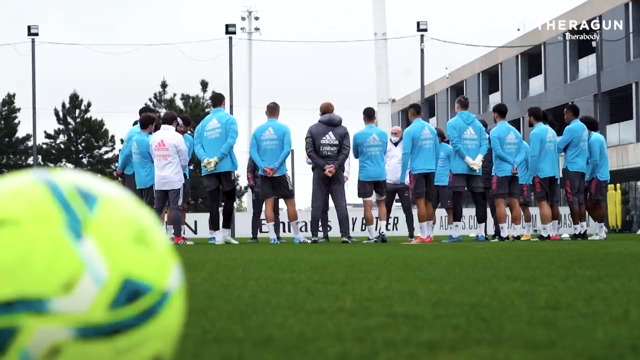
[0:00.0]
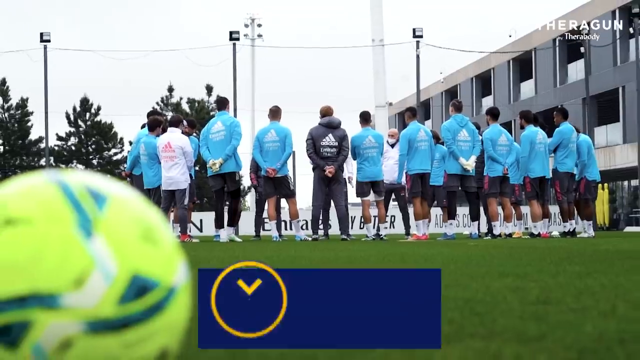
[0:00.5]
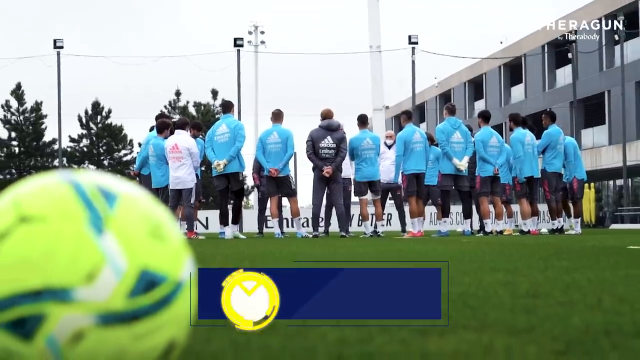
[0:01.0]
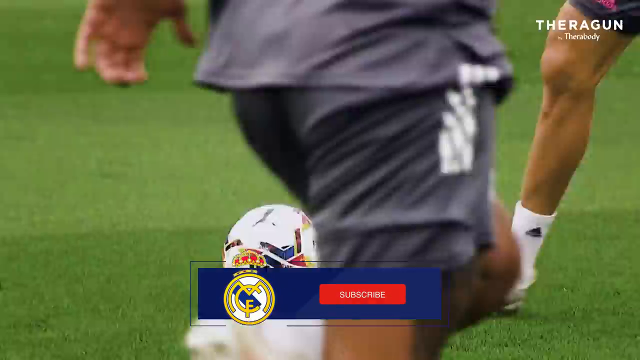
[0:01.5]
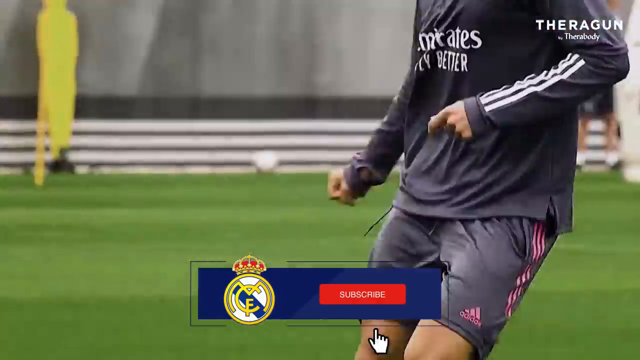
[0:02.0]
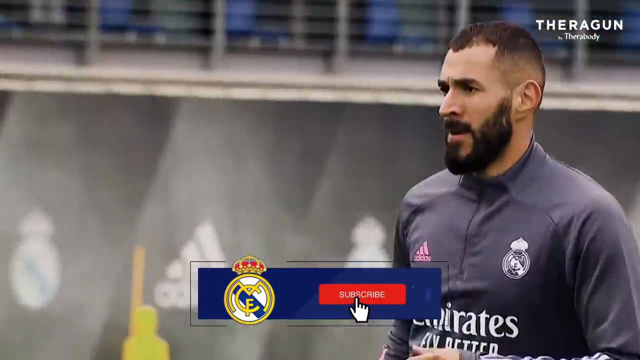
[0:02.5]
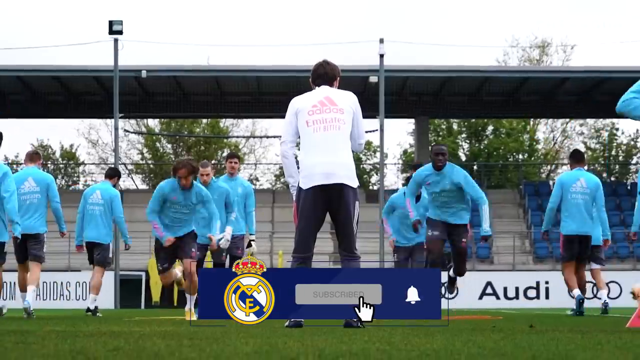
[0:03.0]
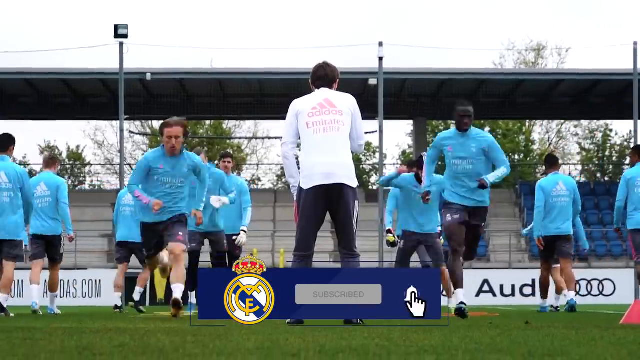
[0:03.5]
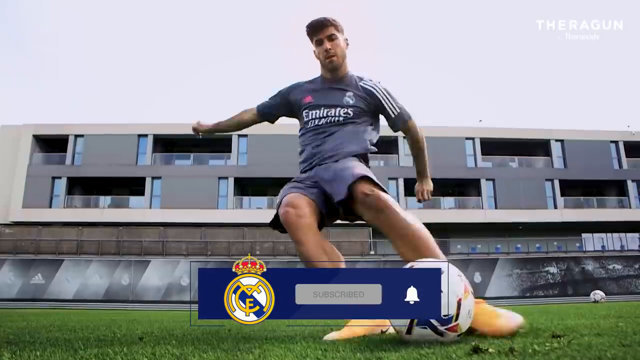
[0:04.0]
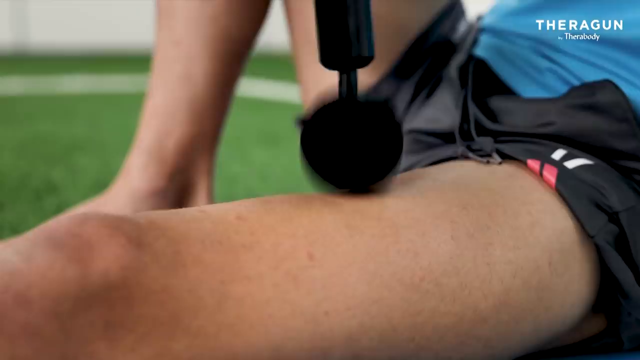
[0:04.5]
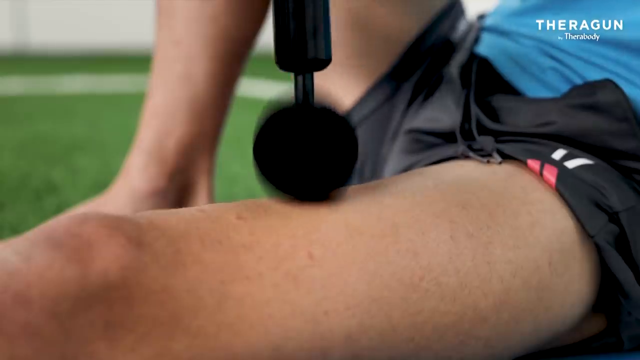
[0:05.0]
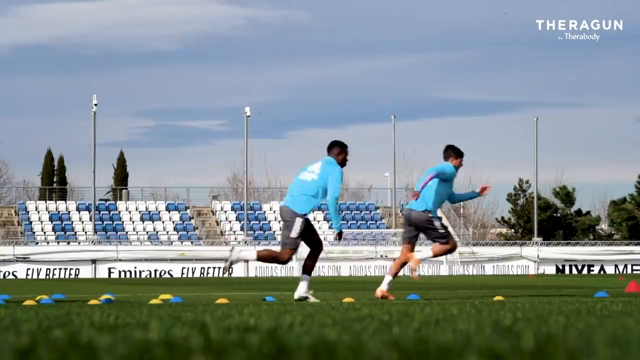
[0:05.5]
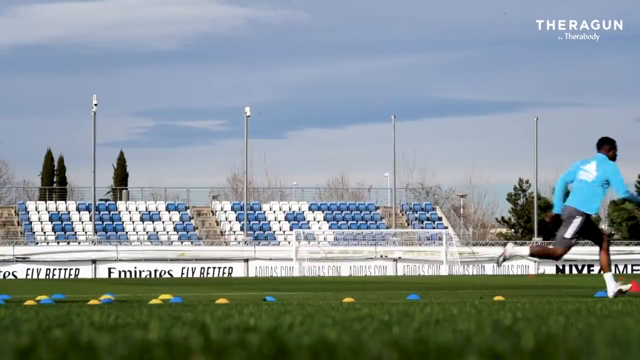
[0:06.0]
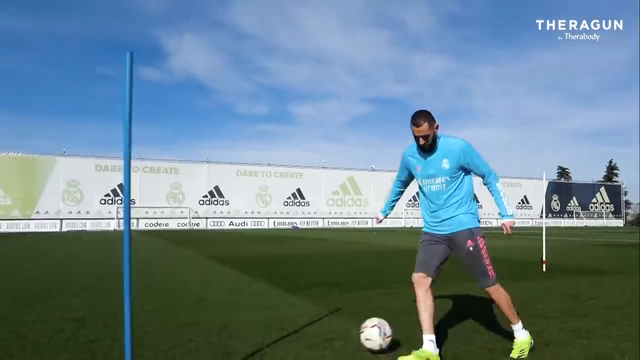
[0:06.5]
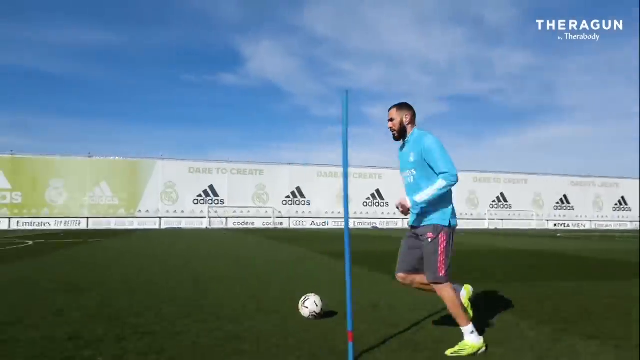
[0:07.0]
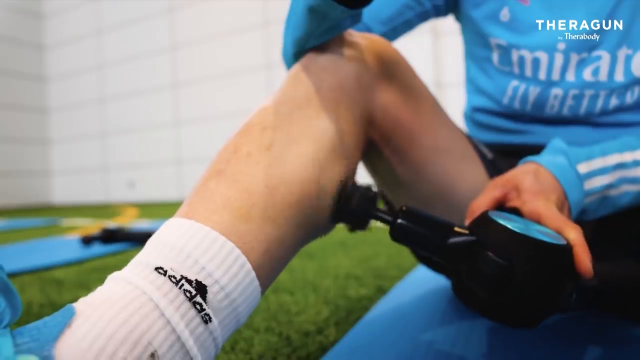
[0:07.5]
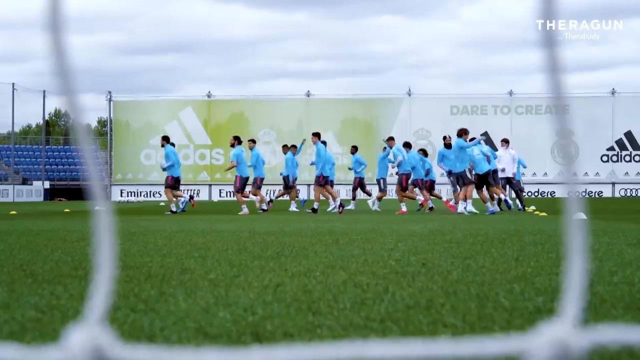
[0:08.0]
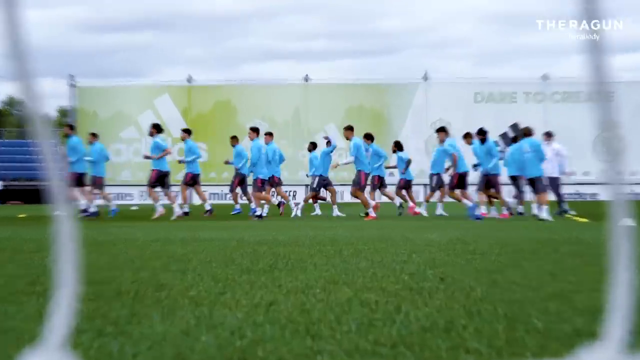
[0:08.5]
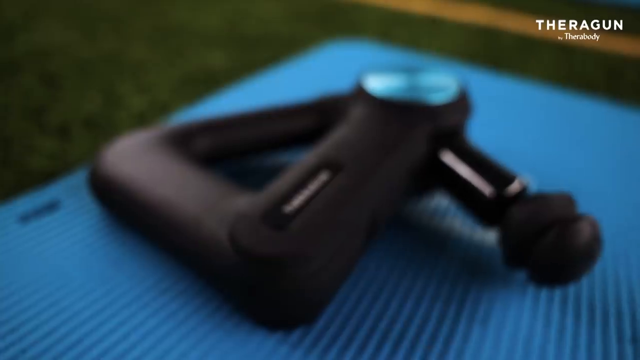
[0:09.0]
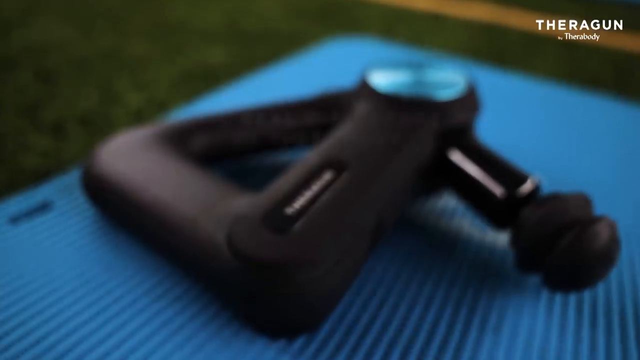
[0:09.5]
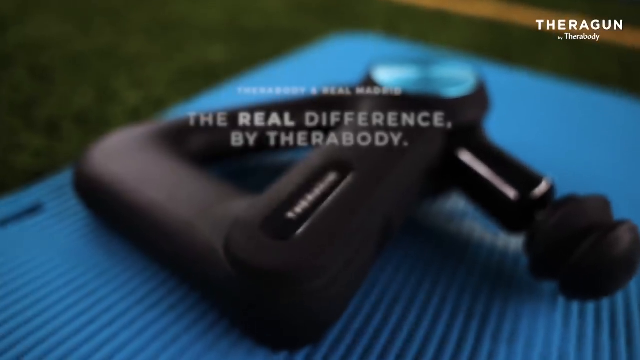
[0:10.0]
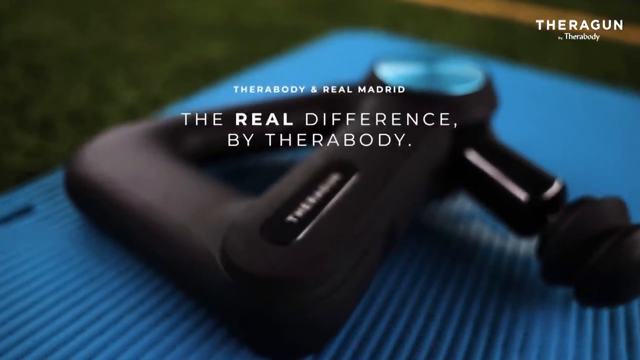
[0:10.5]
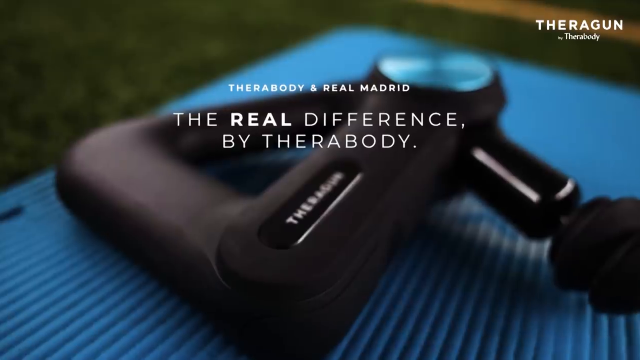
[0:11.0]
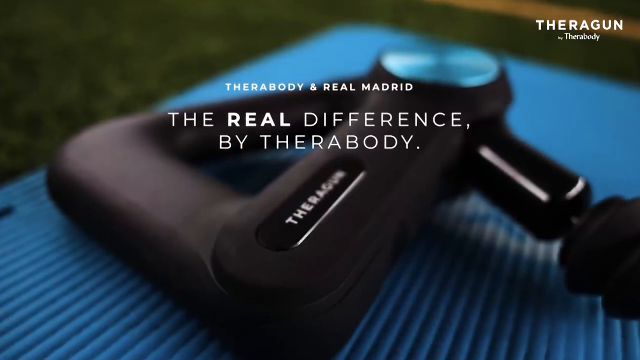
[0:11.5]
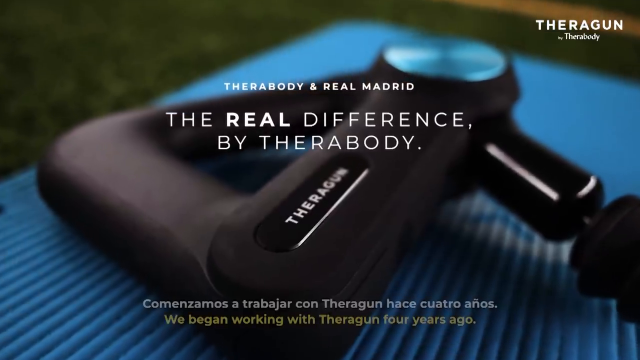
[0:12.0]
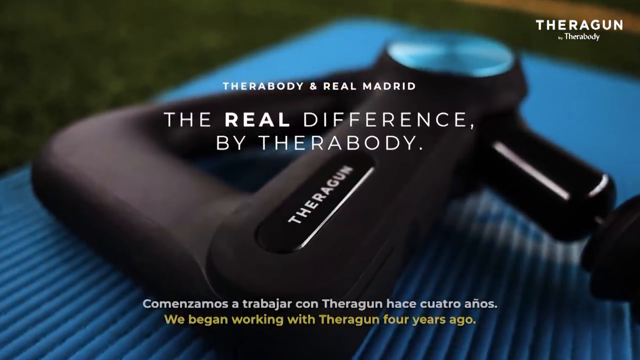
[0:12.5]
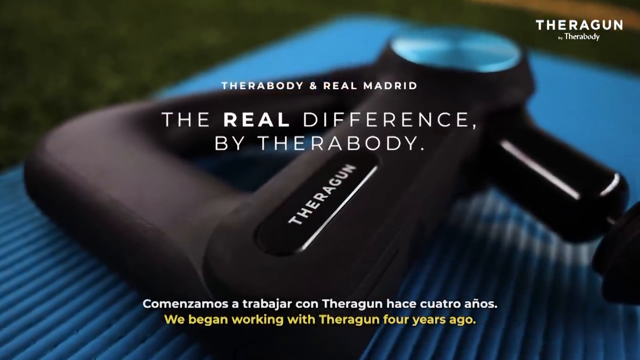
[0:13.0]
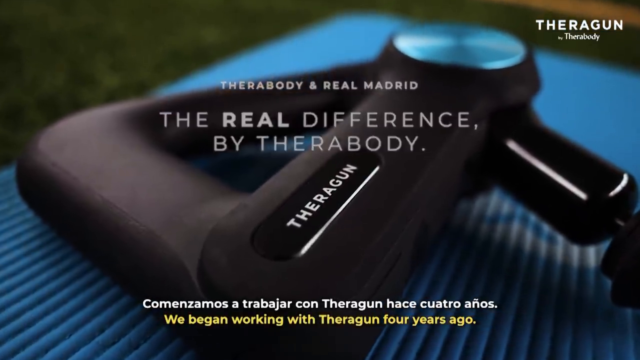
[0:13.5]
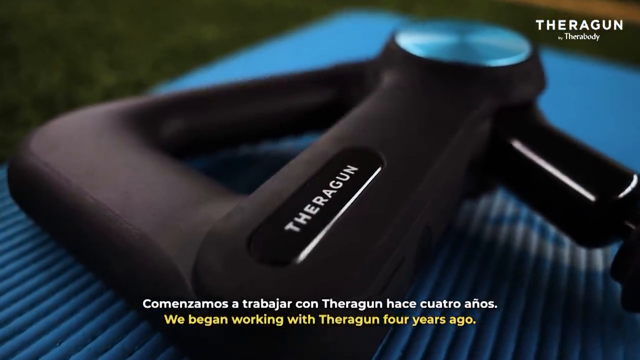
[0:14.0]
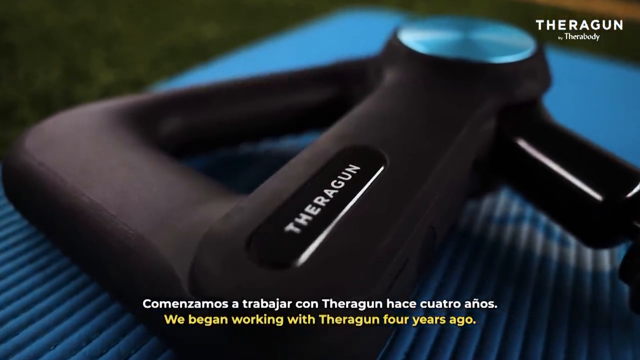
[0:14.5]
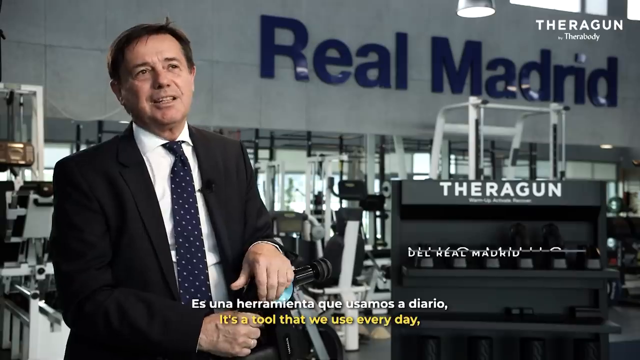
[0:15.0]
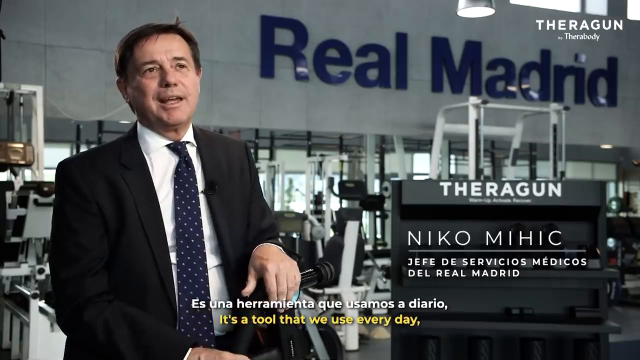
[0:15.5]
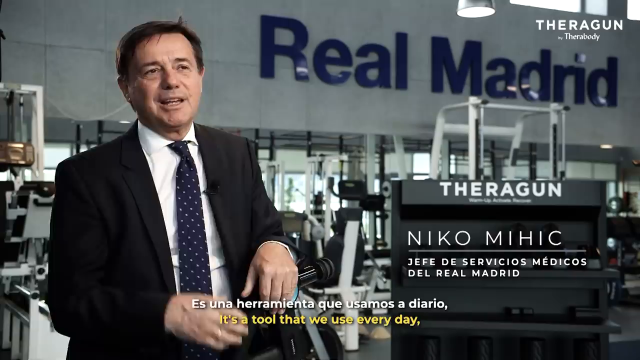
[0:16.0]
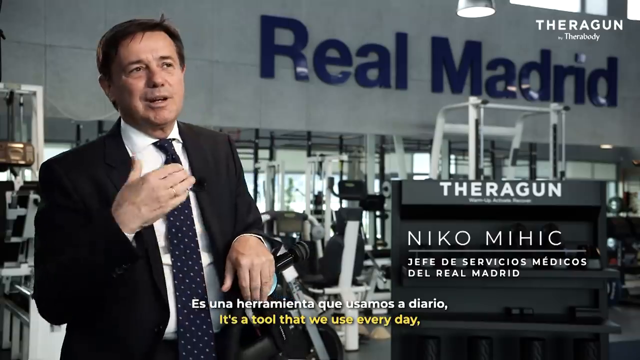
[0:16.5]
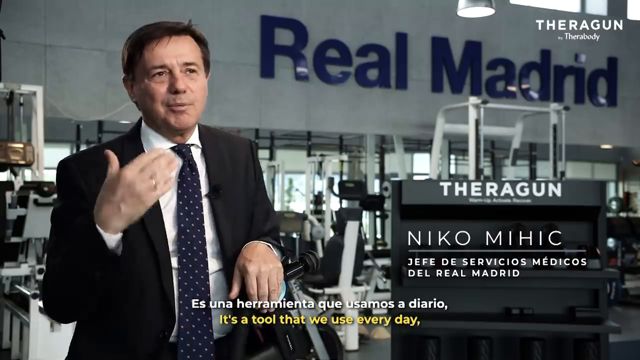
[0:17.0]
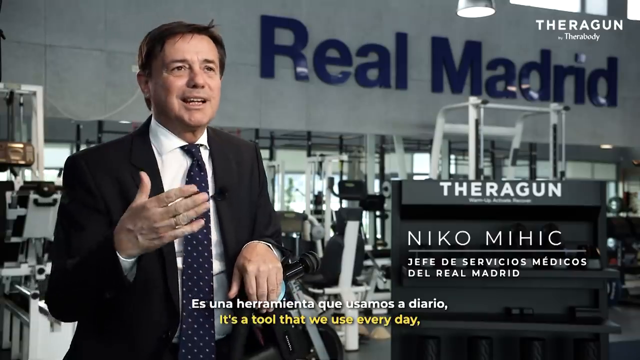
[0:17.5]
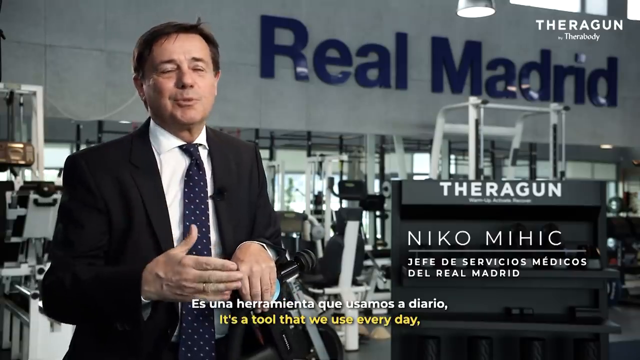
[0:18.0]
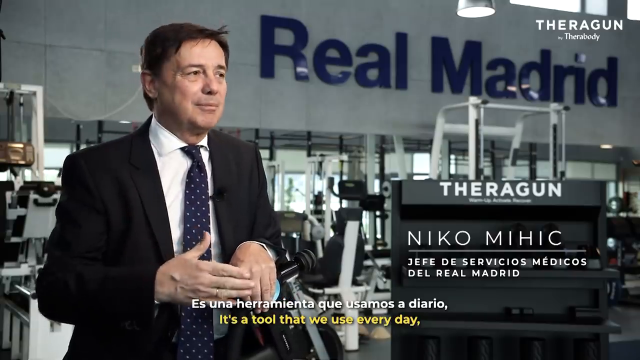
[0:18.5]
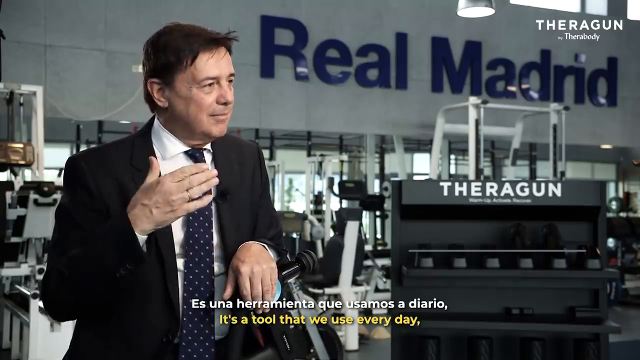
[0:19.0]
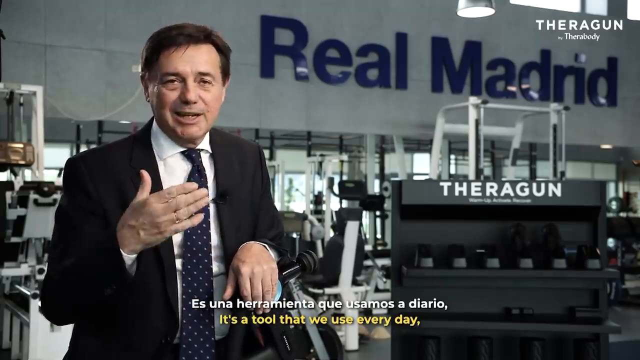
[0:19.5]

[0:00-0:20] A group of what appear to be soccer players stands together. Most wear black shorts and blue long-sleeved shirts with the Adidas logo on the back. A man in the middle wears a black hooded puffy jacket with the Adidas logo. A good number of them have their hands behind their backs, and a building is visible in the background. Someone in the middle talks to them as they form a rough semicircle. A close-up shows a green soccer ball. A player dressed all in black, with "Emirates" on his jacket, kicks a ball with his right foot. The players in blue line up in front of a man in white who faces them, and they sprint one after the other. A man in black kicks the soccer ball with his left foot. A man sits with his leg out as a massager moves up and down on it. Two players in blue long-sleeved shirts and black shorts run one after the other next to cones on the ground. A man kicks the soccer ball with his left foot. Someone uses the massager on a calf. A group of players runs in two directions: most run the same way, while a couple run the opposite way and high-five the players going the other way. A still photo of the massager appears, with "Thera Gun by Therabody" in the right-hand corner.